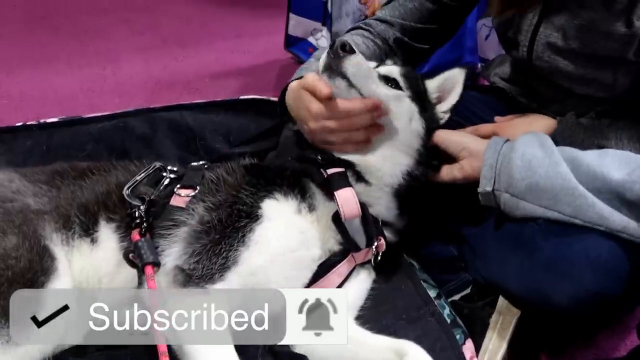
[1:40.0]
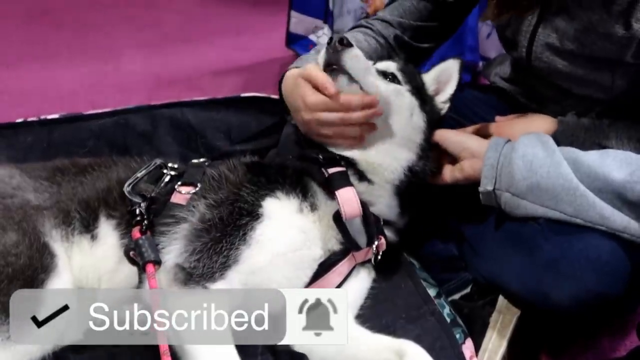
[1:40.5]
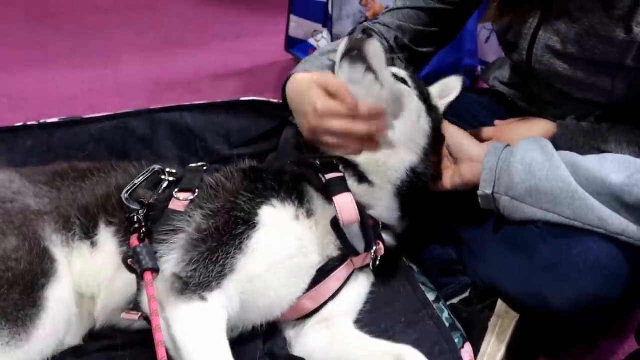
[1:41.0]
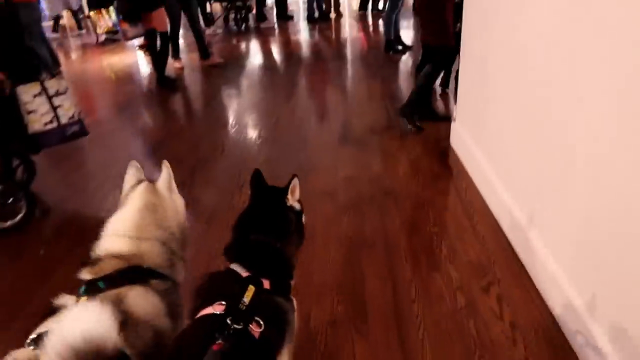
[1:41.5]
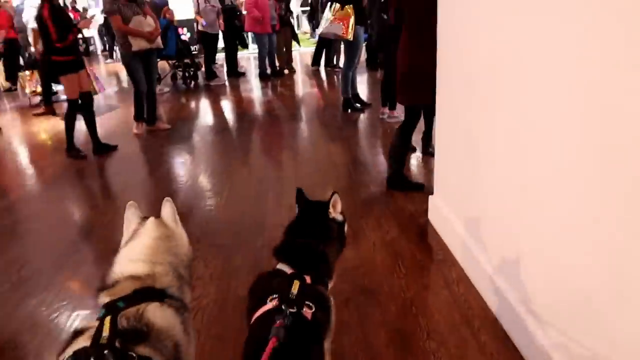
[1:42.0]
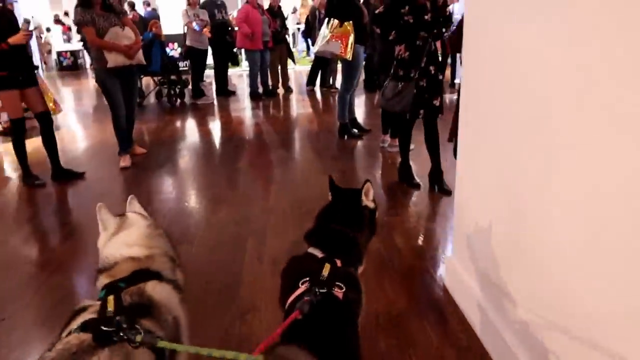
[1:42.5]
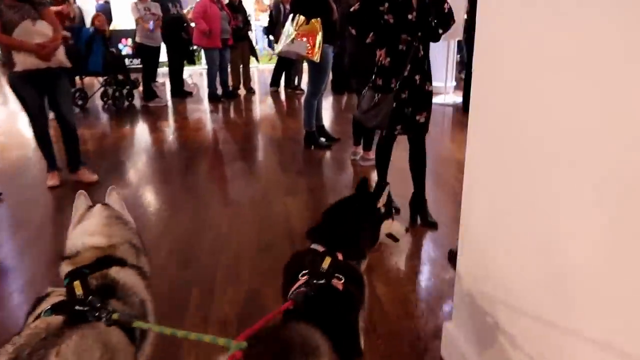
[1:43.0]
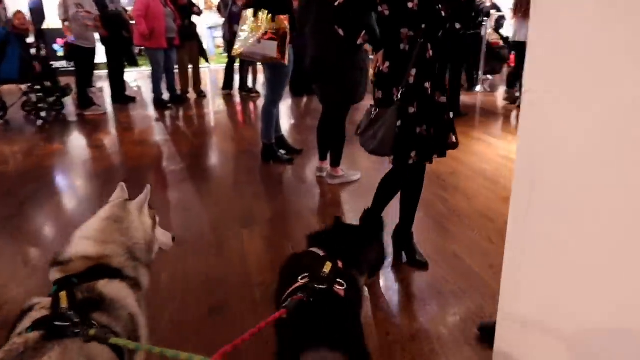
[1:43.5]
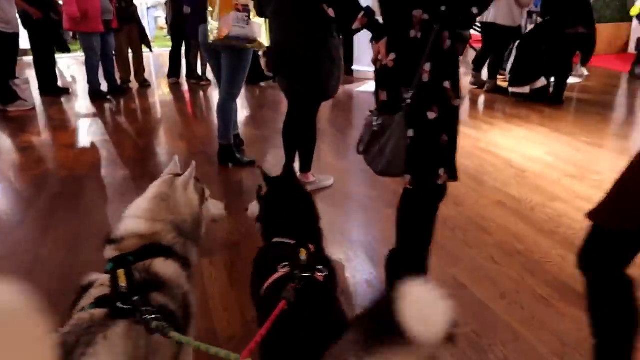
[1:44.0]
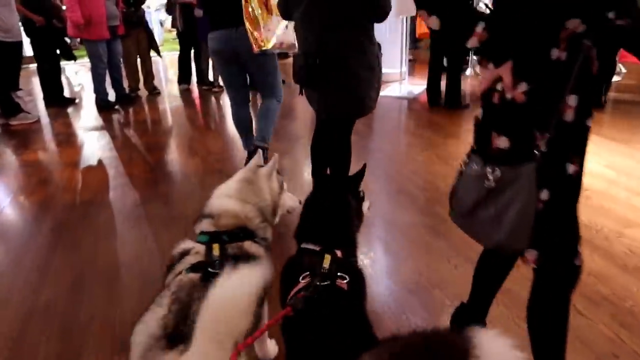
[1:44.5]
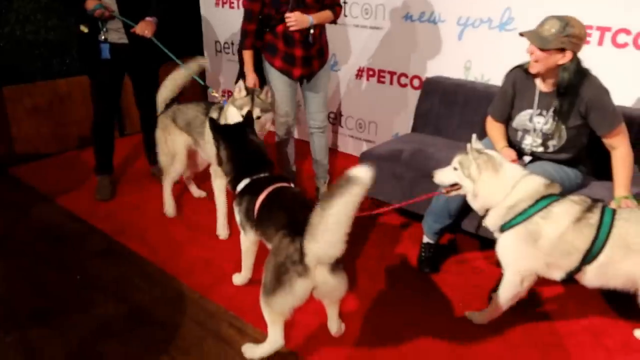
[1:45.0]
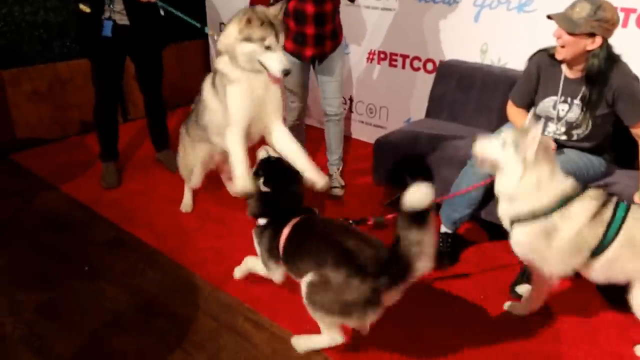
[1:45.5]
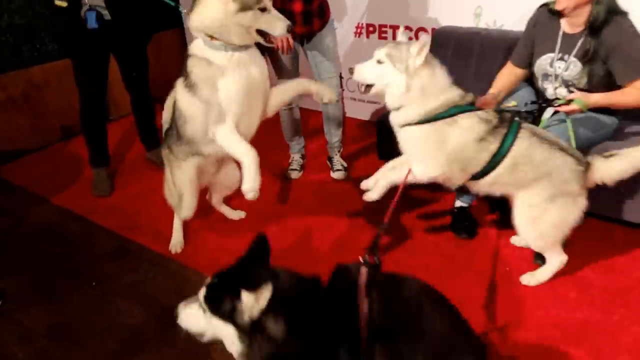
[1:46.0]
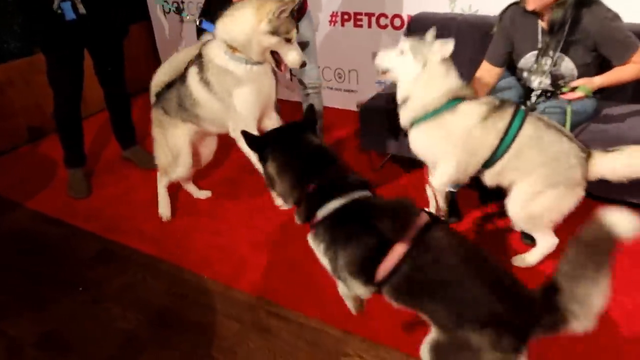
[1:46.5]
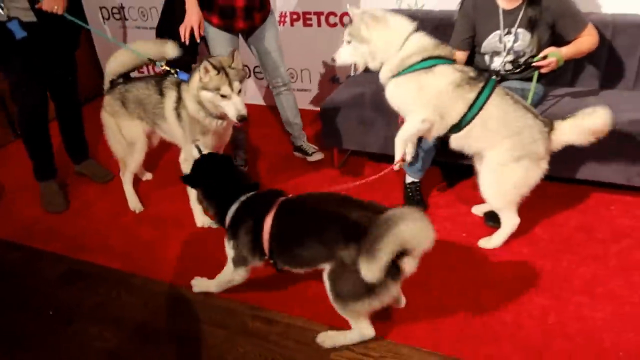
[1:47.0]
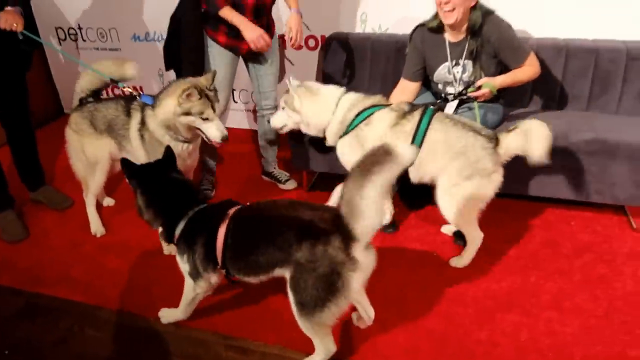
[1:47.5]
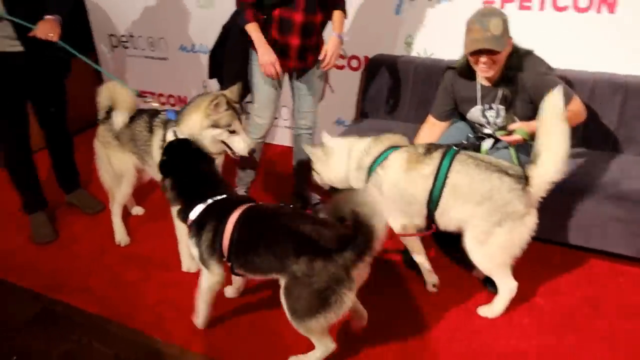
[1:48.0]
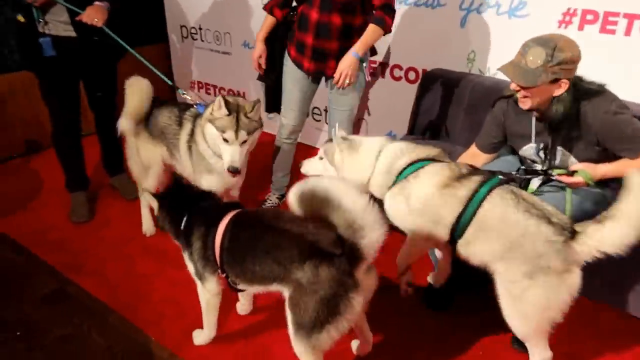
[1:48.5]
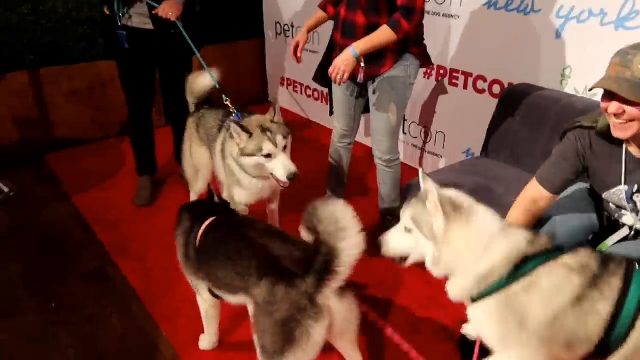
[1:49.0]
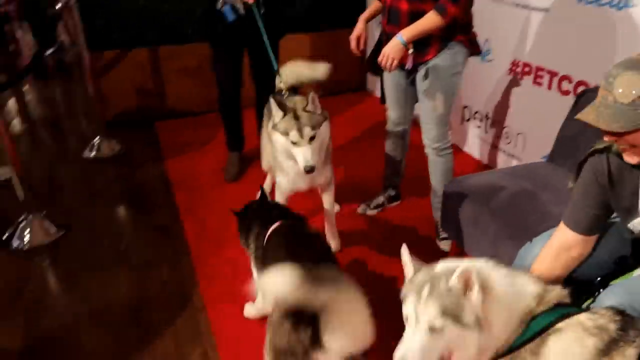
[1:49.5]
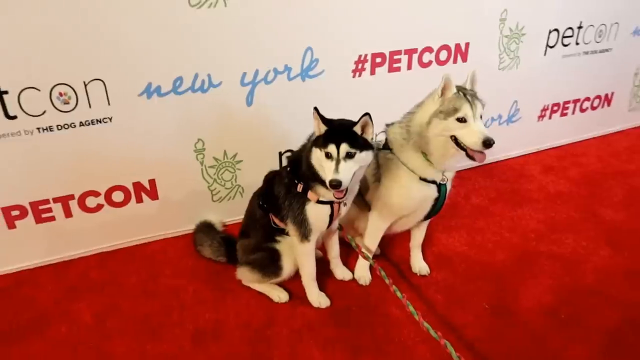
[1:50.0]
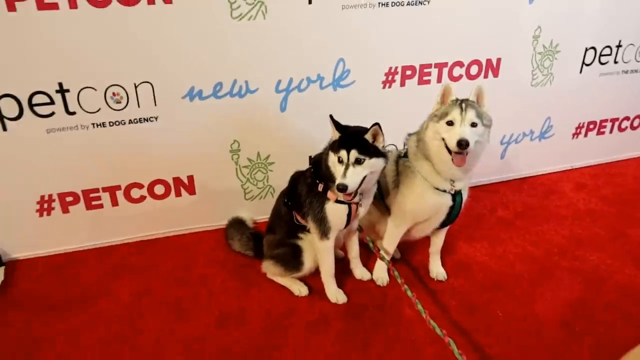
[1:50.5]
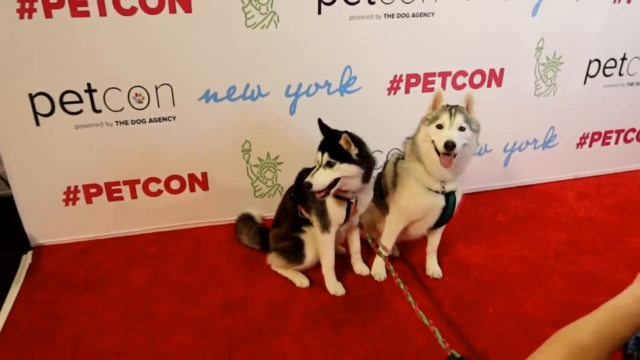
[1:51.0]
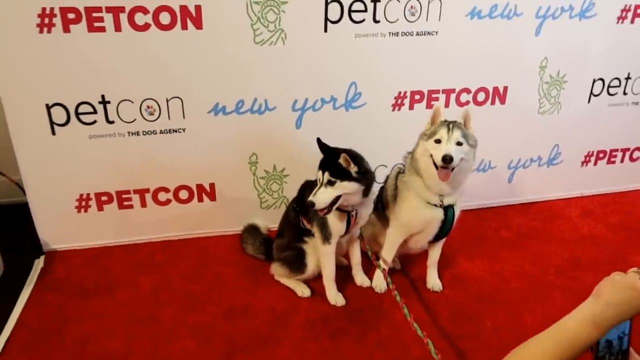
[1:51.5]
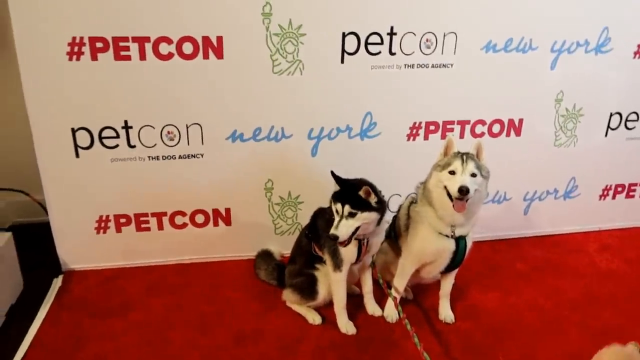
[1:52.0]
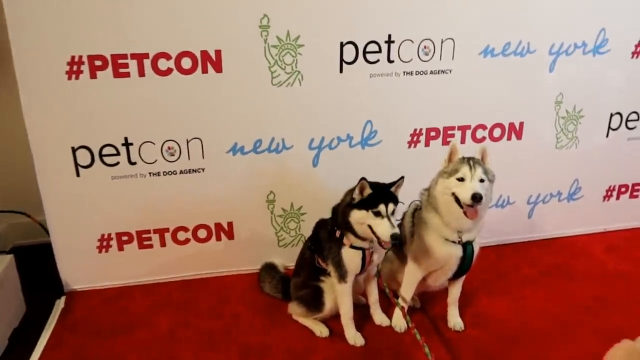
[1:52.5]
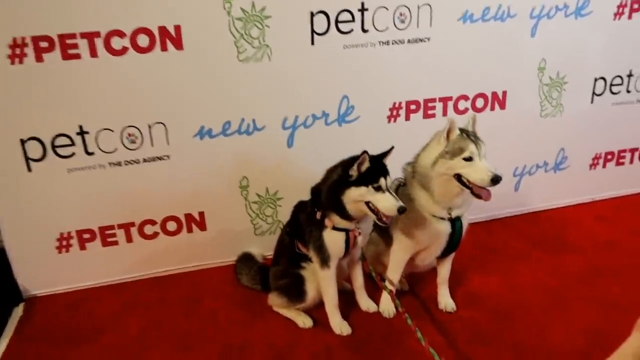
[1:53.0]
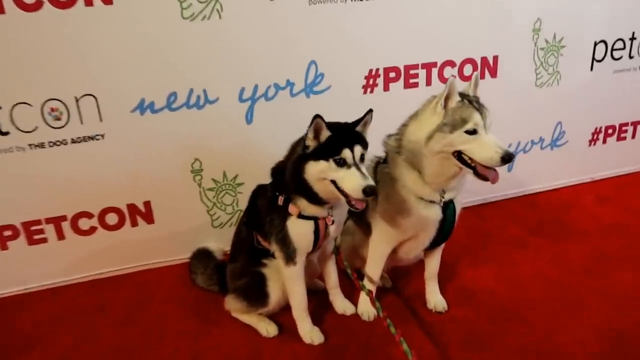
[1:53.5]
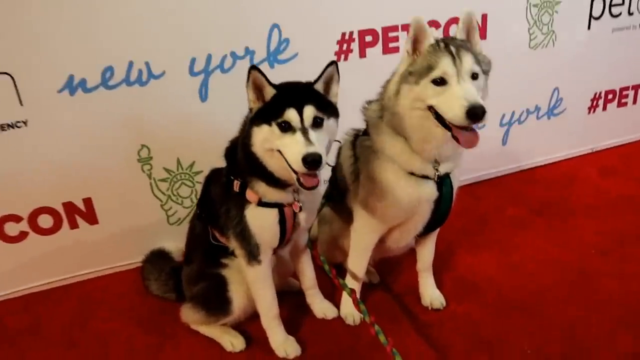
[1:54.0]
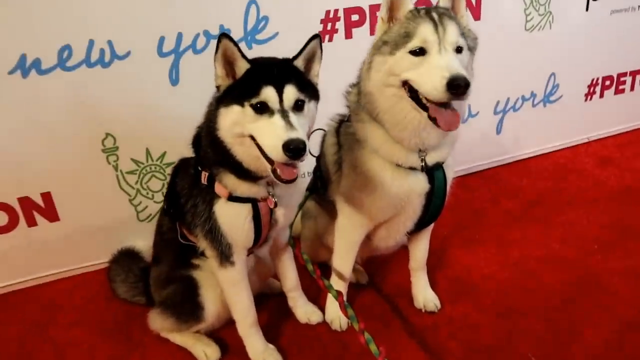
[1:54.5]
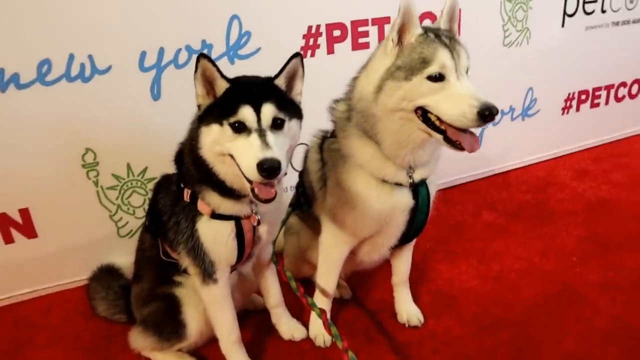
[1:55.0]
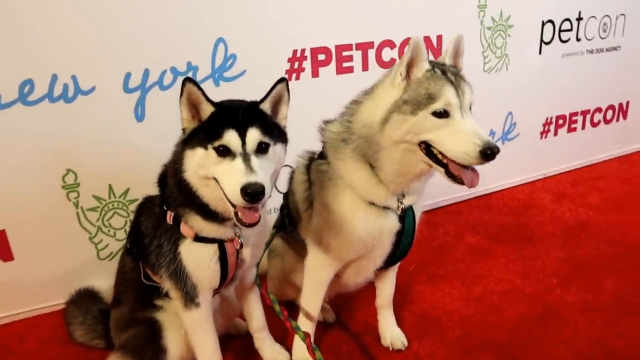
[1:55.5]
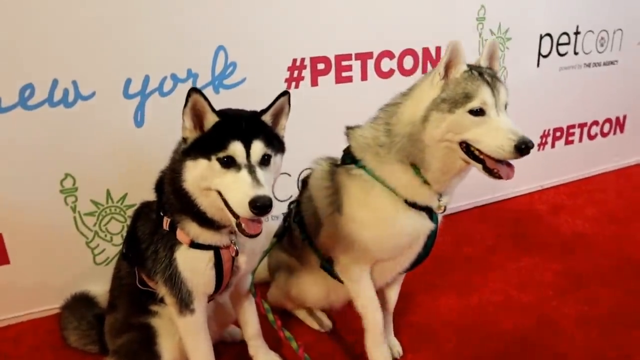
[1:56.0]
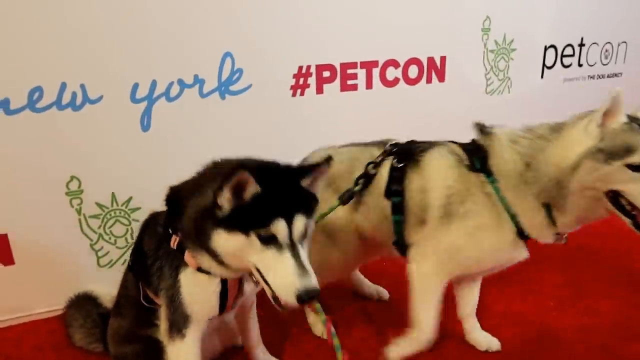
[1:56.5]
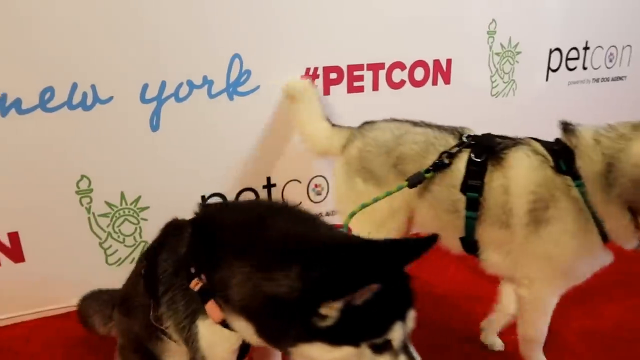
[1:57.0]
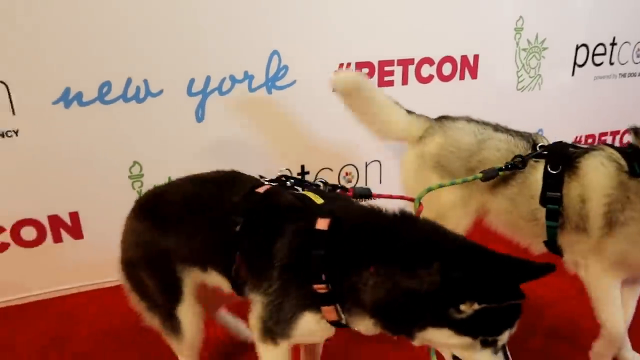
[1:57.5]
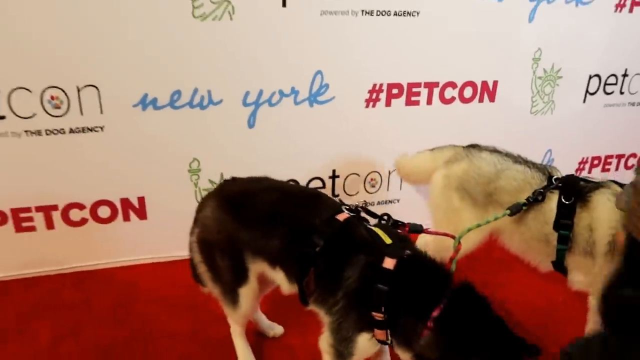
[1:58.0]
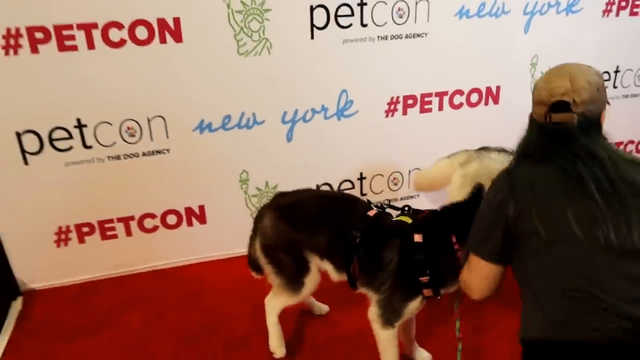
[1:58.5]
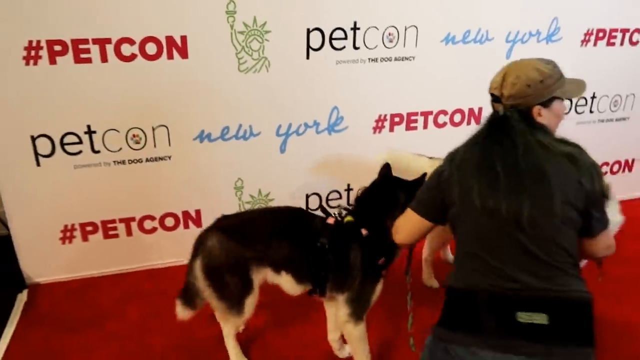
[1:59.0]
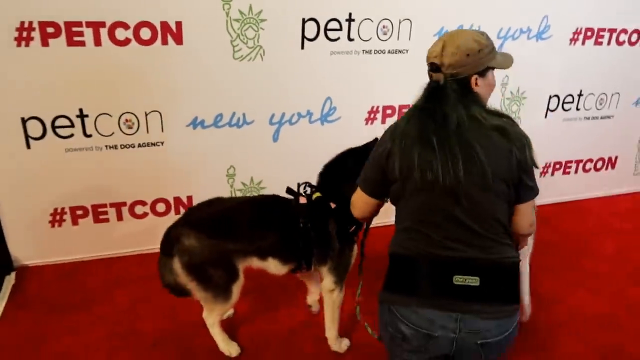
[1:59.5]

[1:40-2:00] Several scenes and angles show husky dogs looking at the camera and walking around in what appears to be an indoor stage and auditorium at what appears to be a dog show; they sit in front of a backdrop listing several pet brands and appear to be competing. At one point an aurora borealis scene appears with text in front of it saying the YouTube channel is dedicated to these dogs, along with a subscribe icon. Social media icons then appear with text telling viewers to follow those pages as well.